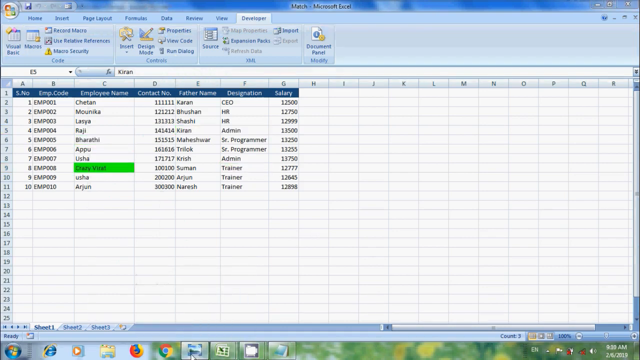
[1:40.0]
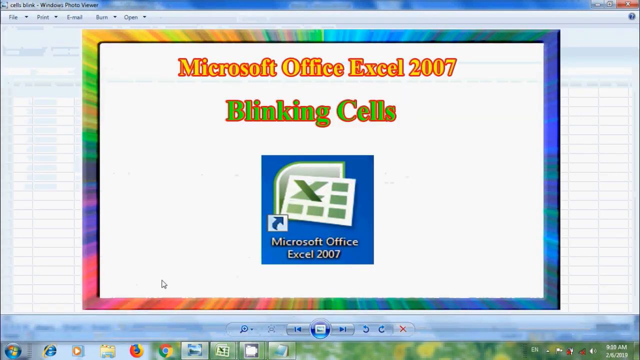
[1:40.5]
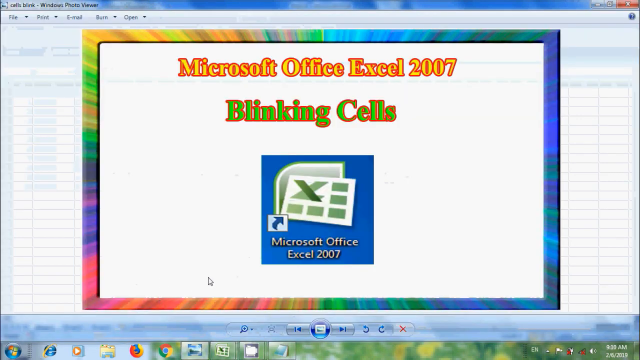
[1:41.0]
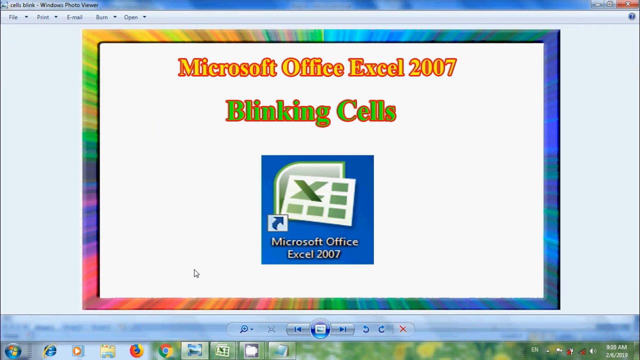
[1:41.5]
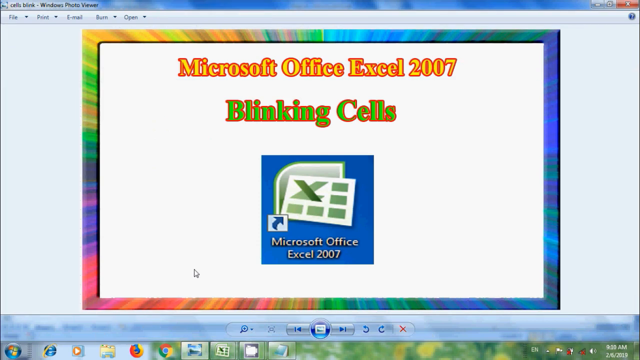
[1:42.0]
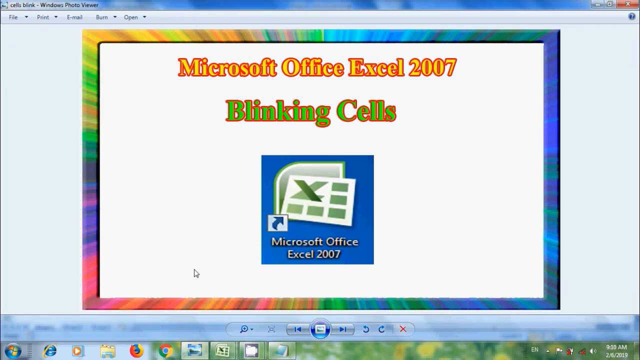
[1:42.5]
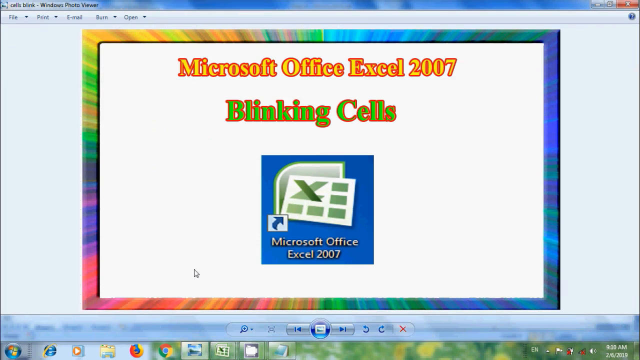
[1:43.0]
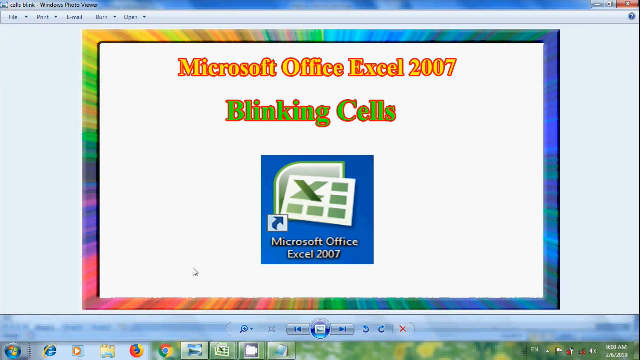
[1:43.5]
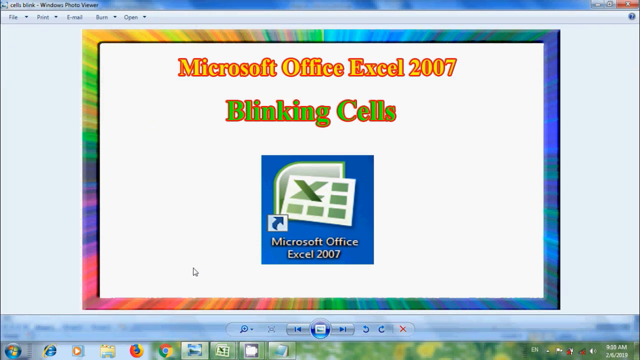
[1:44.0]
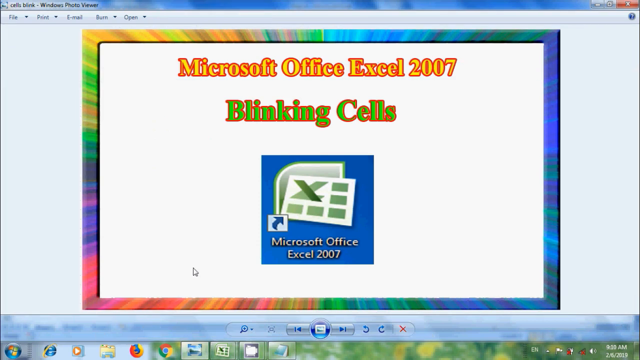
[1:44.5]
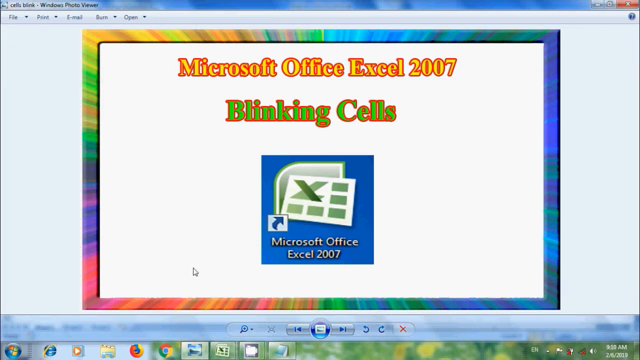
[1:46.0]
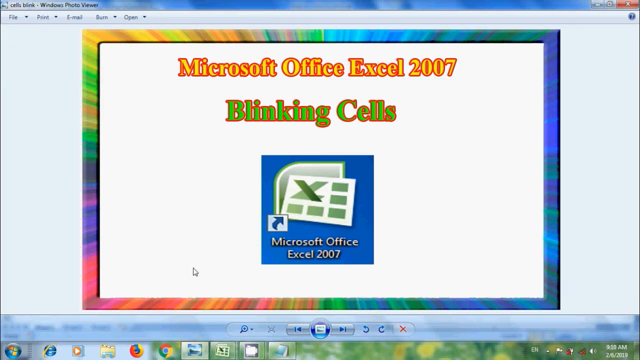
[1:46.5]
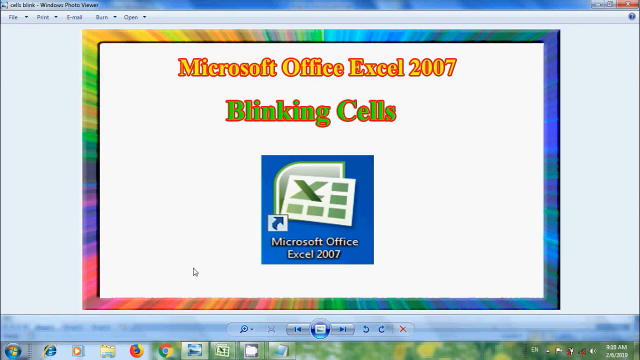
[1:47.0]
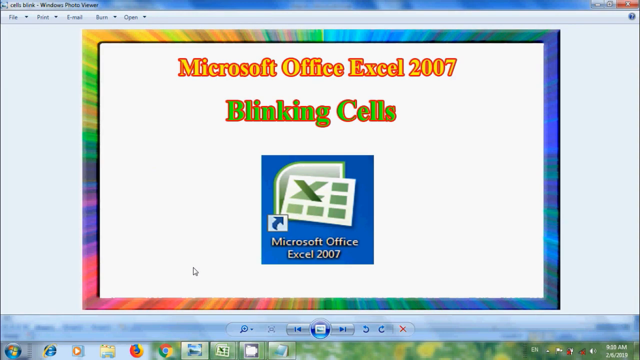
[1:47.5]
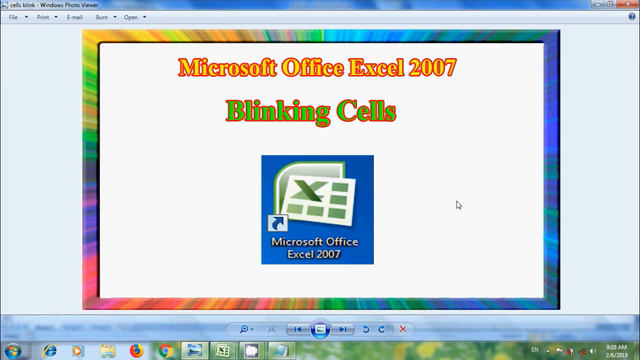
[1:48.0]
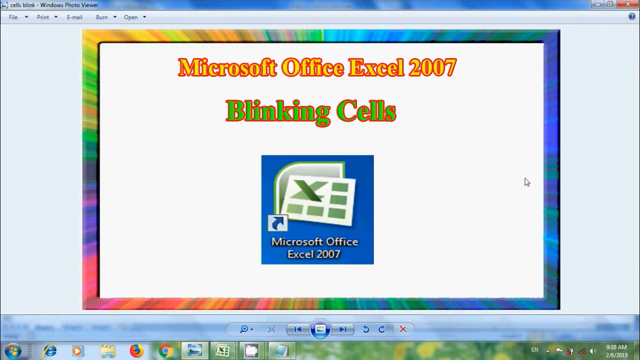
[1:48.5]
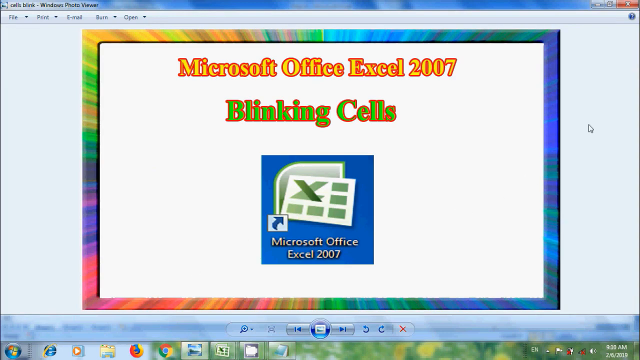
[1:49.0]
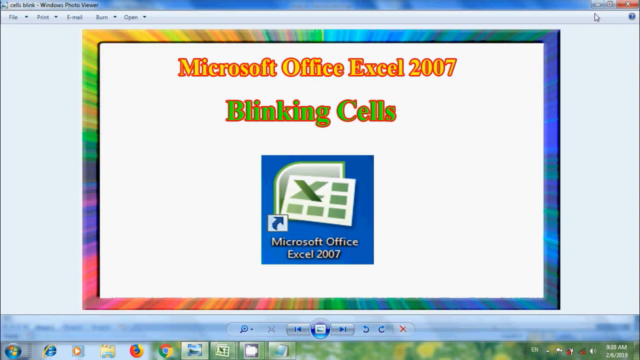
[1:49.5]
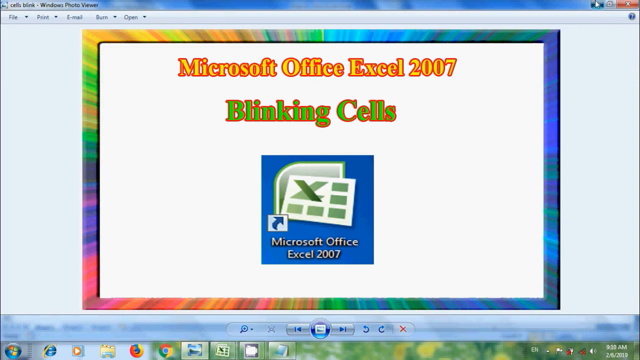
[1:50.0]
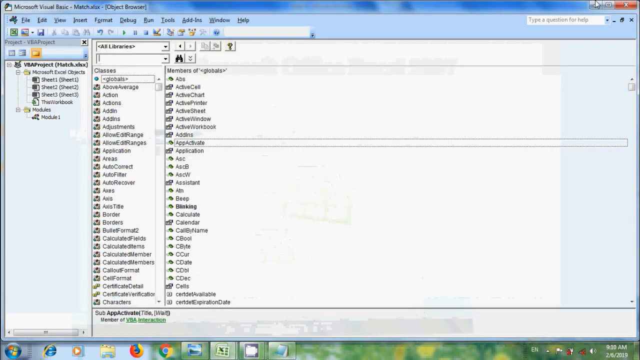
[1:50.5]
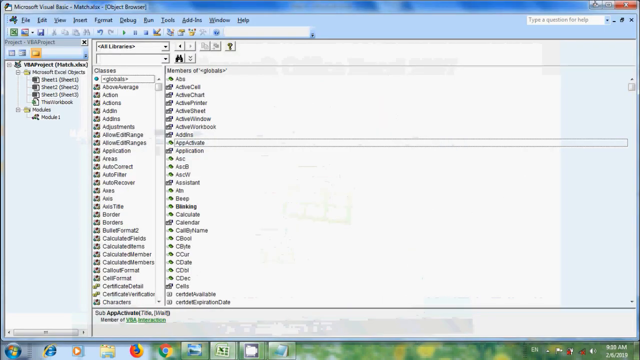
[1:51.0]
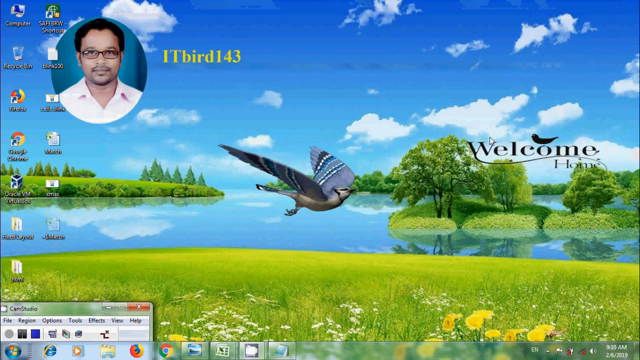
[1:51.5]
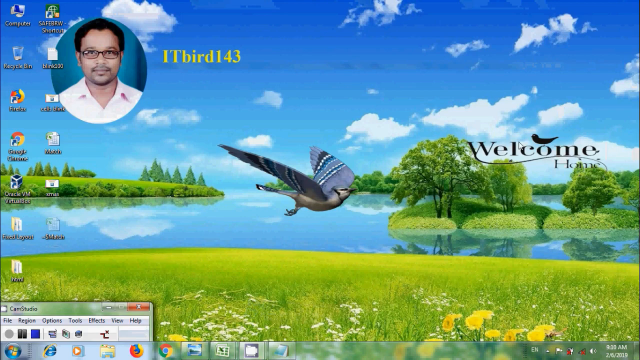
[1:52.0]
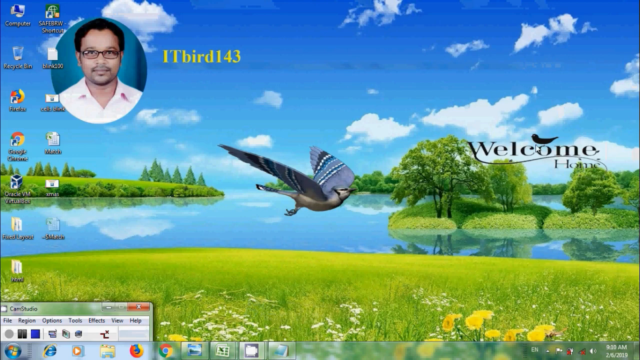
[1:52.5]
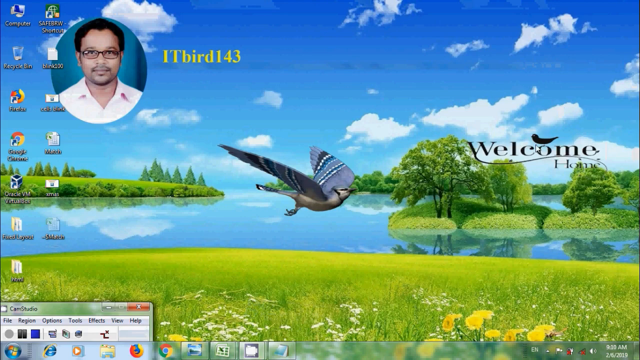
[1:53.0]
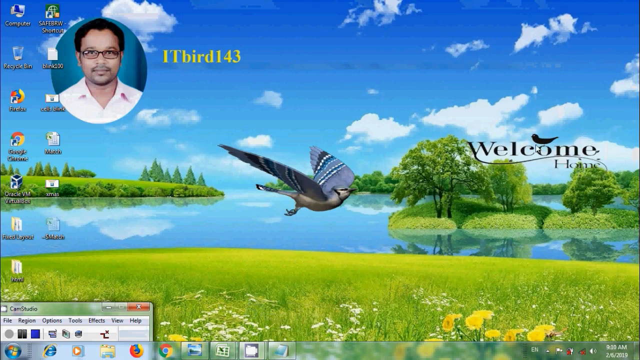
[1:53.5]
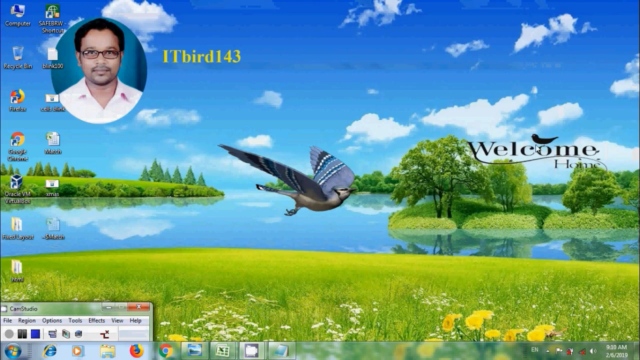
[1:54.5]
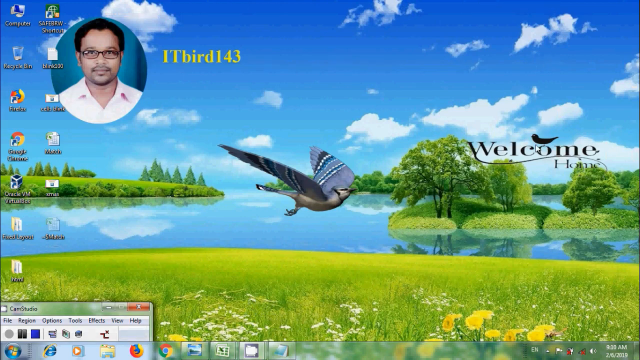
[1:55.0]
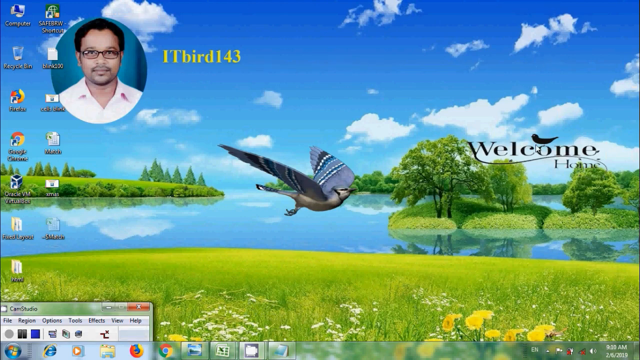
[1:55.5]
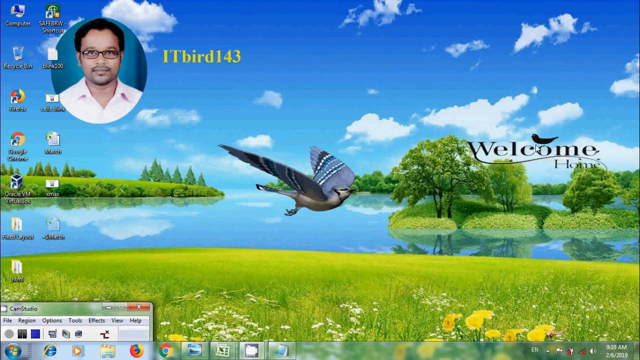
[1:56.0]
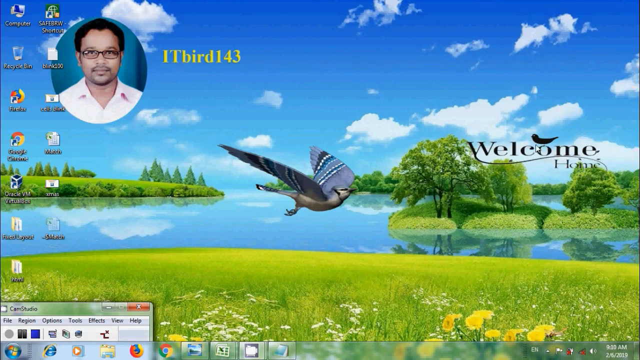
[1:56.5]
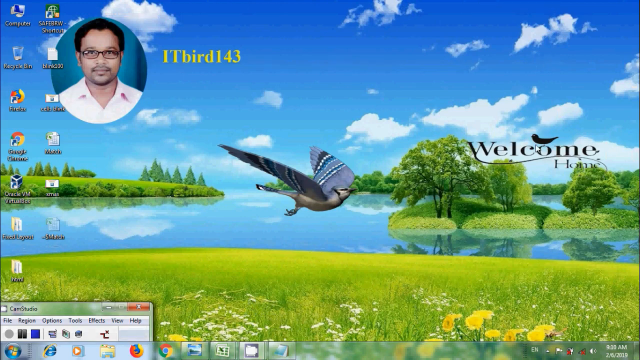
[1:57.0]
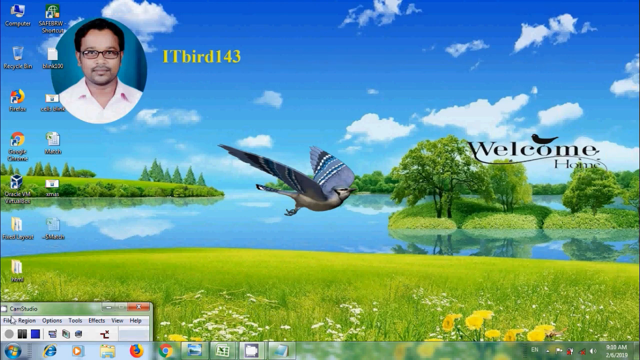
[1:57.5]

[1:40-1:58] Microsoft Excel 2007 blinking cells is shown, with the person moving around Microsoft Excel trying to create a command. ITBird143 is shown with the desktop background.